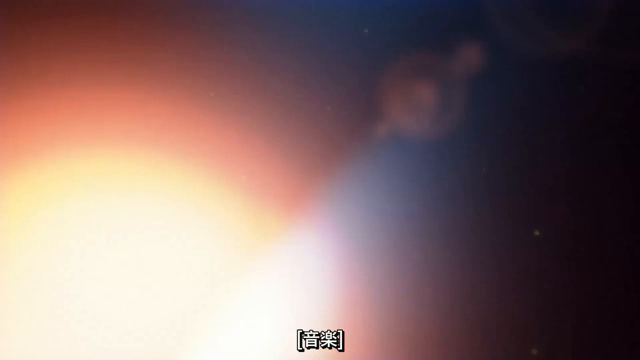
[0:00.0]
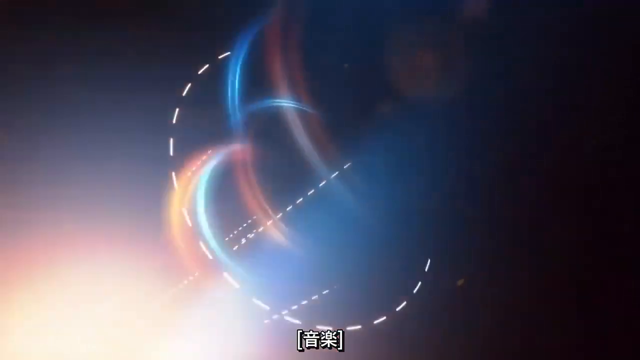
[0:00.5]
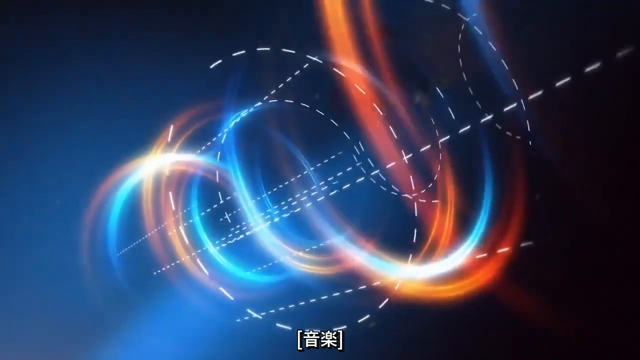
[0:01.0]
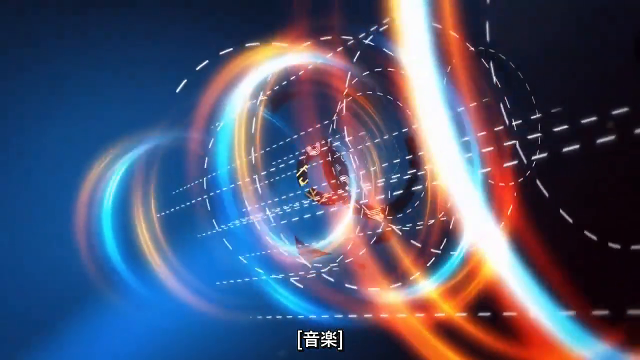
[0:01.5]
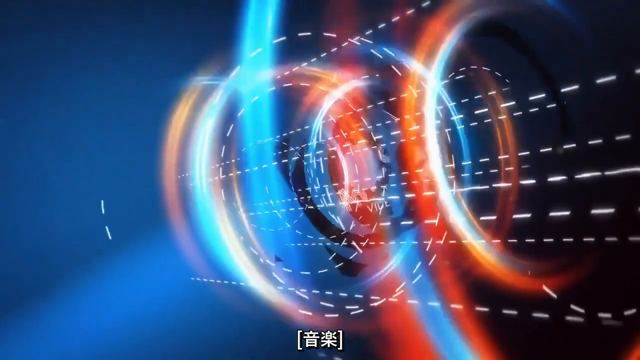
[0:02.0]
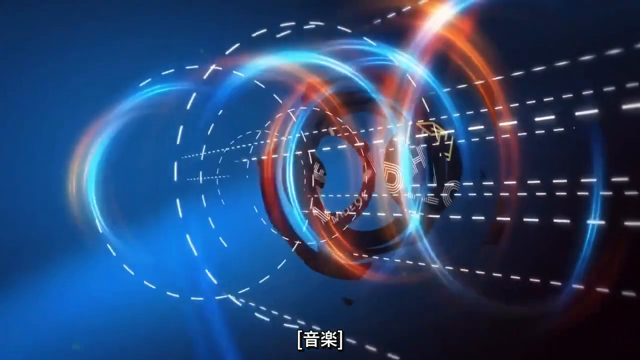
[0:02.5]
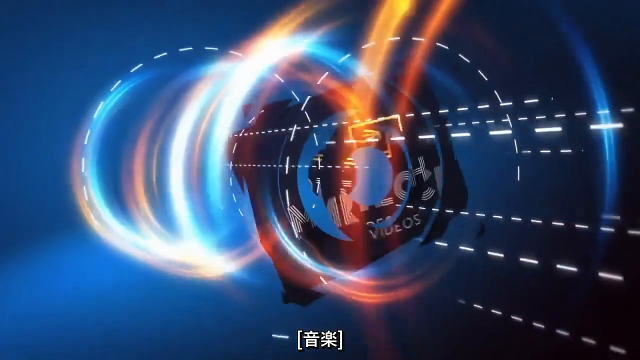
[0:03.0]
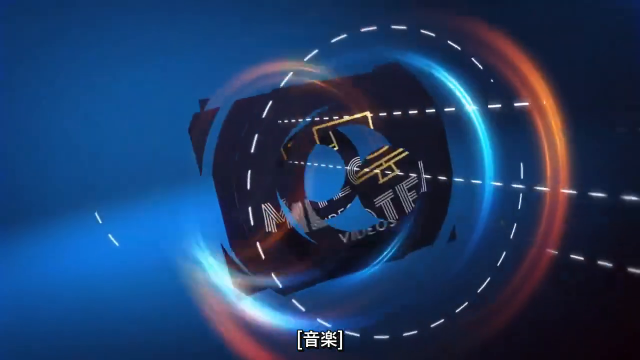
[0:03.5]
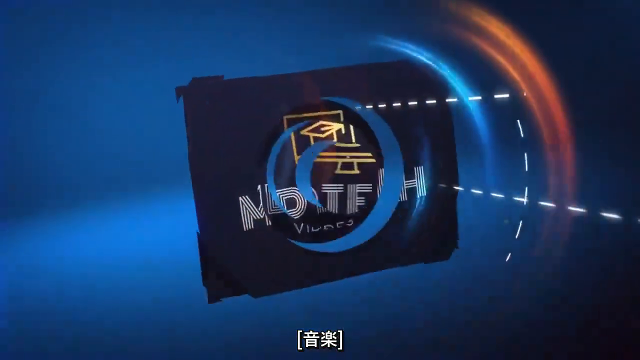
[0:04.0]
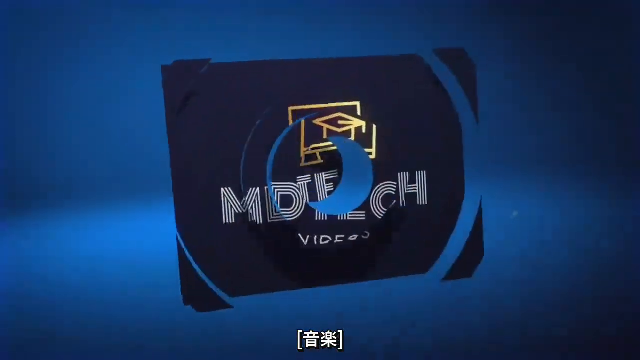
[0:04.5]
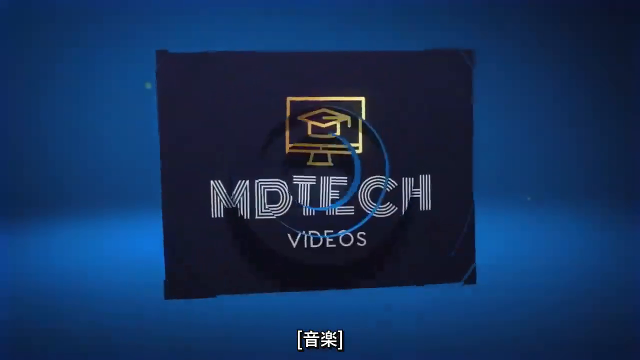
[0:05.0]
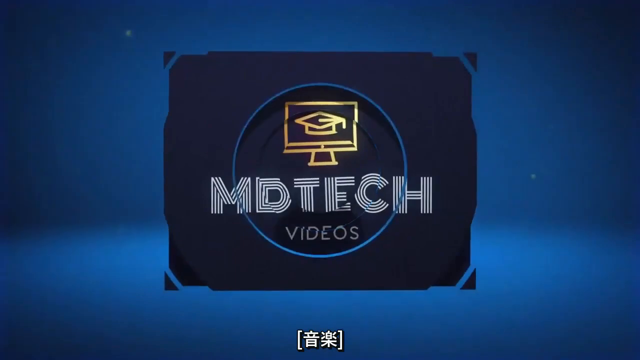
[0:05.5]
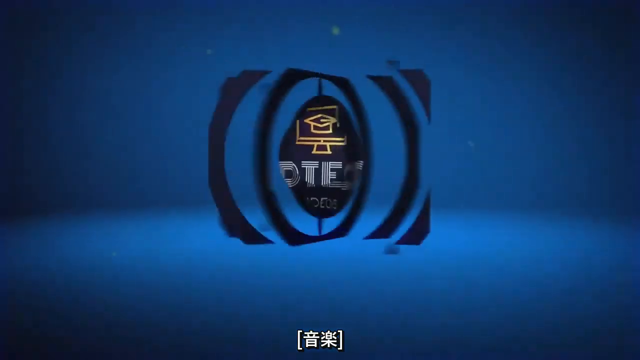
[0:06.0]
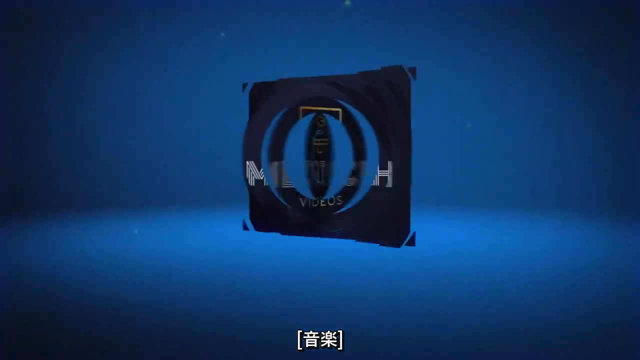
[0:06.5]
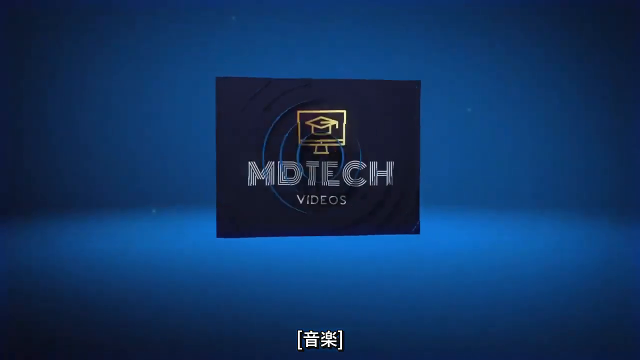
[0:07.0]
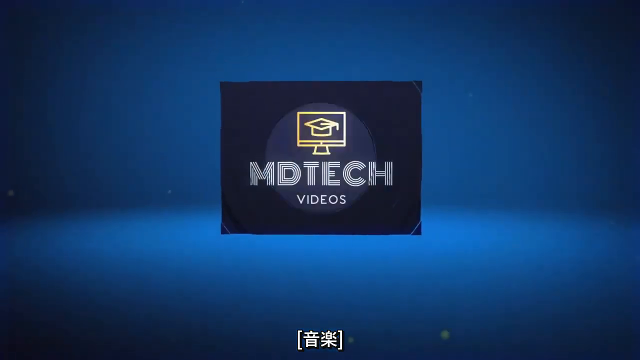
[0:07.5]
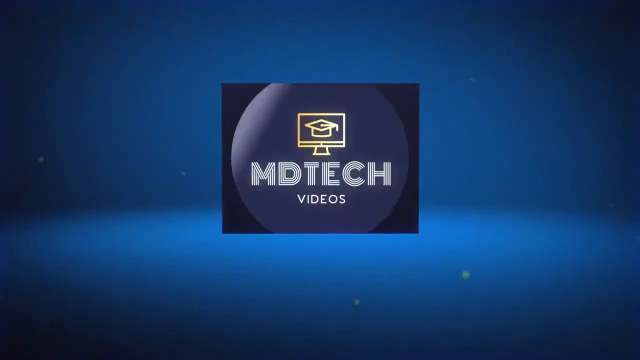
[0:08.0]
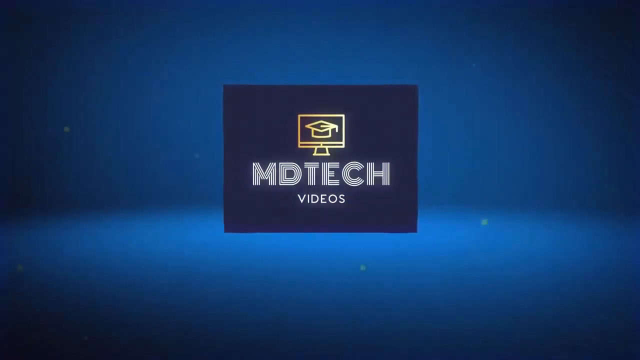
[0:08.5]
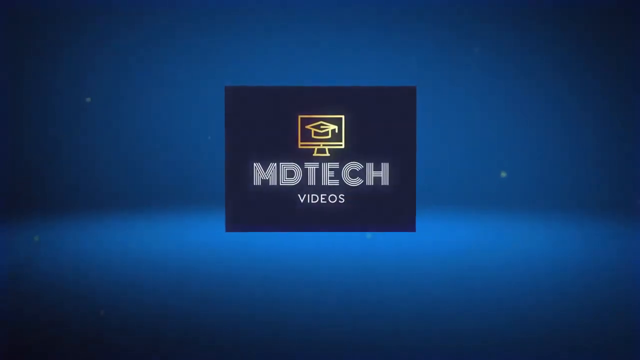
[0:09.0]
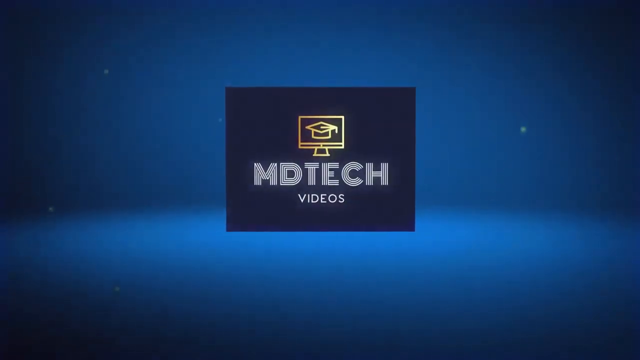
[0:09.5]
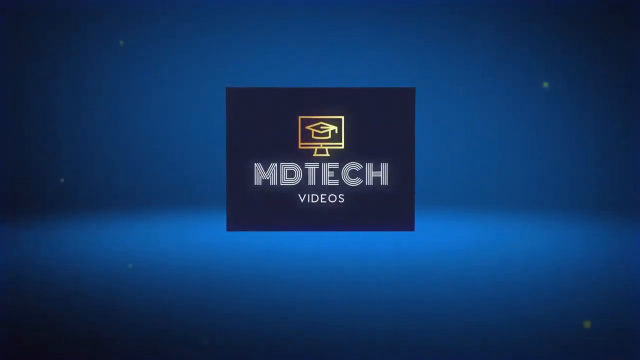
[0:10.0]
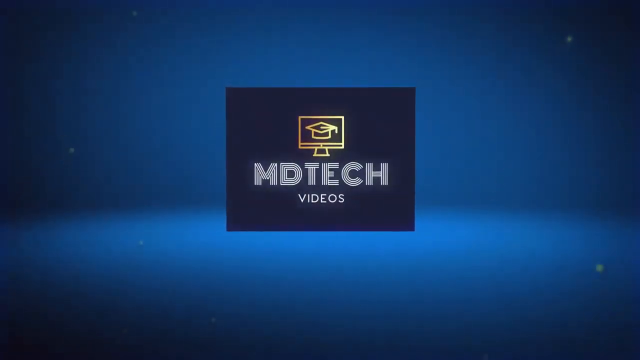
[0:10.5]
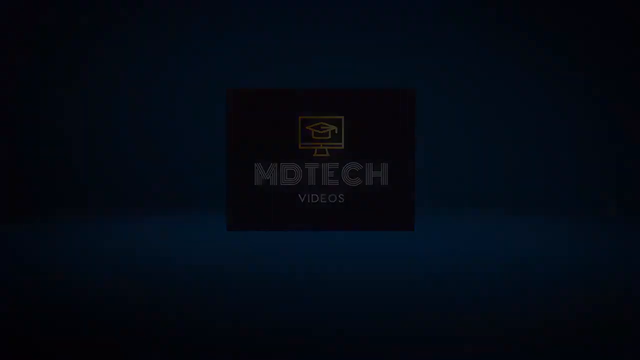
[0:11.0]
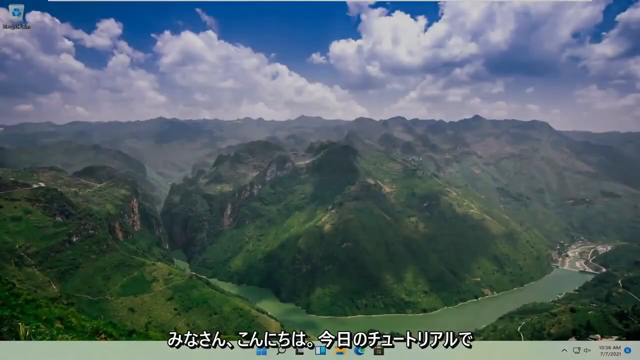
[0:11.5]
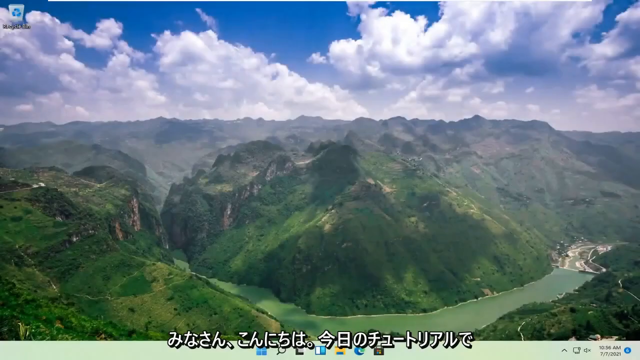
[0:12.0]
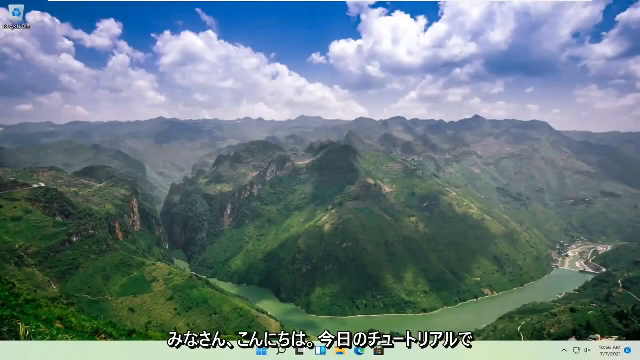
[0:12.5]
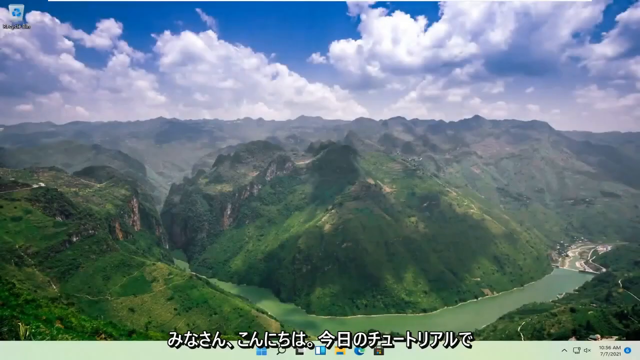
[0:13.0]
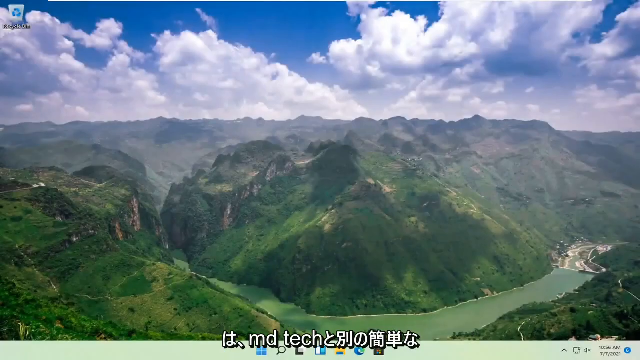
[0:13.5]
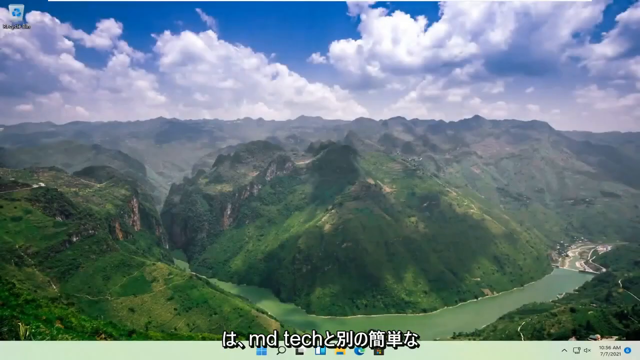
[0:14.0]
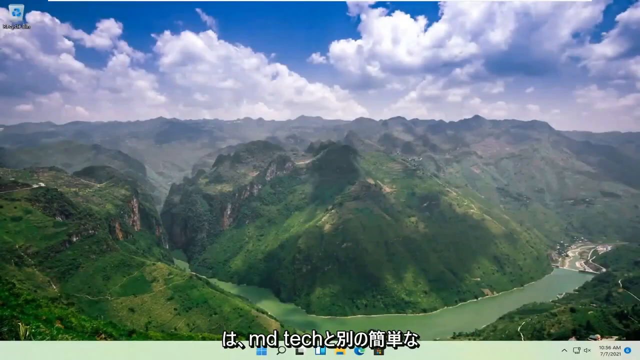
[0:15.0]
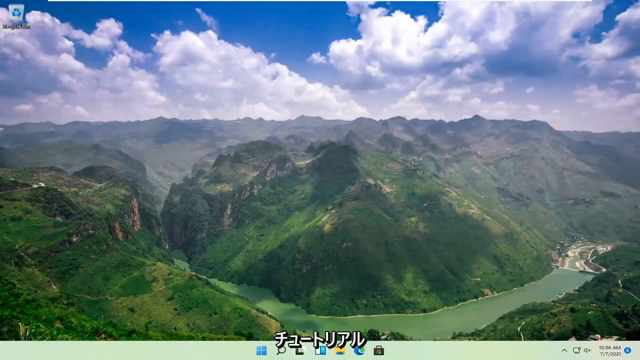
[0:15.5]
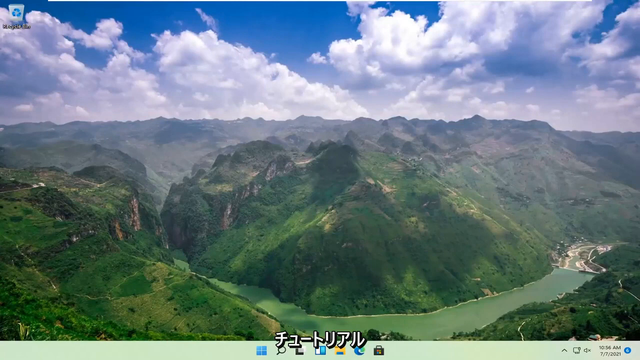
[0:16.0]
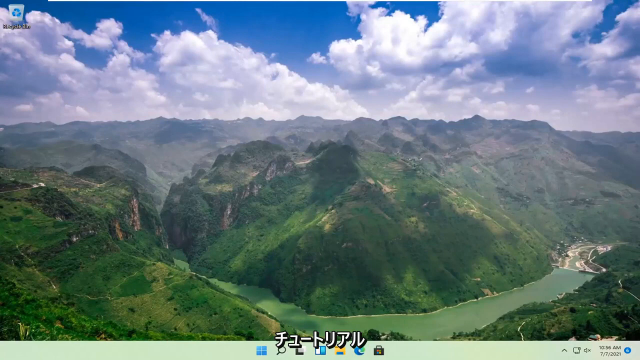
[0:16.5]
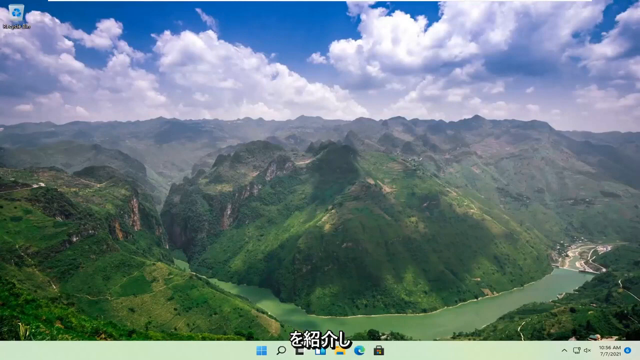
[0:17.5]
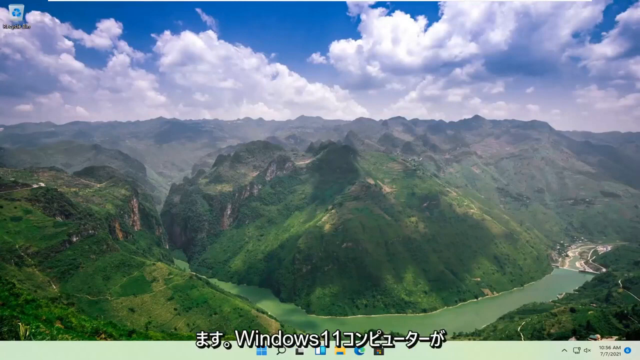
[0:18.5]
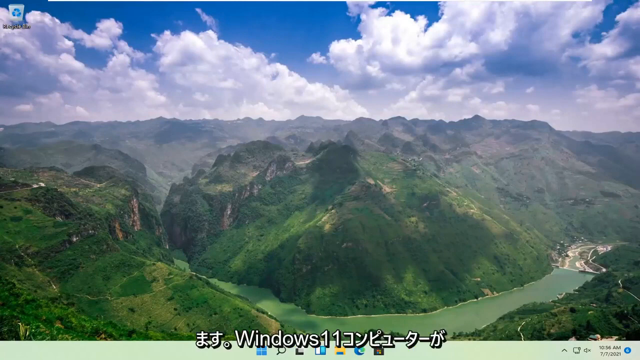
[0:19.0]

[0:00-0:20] The video opens with the logo for the company MedTech, then moves to a shot of mountains. It looks like summertime: the mountains are green, and the sky is visible behind them. As the video goes on, writing and subtitles appear at the bottom, apparently in Chinese letters. A computer screen is also visible, and in the very bottom right corner are the time and other logos and apps. The time is 10:56 am and the date is July 7, 2021. There is a volume button with an x and a messages logo. No people appear; there is only the company logo at the beginning, followed by the mountains with the sunshine and sky behind them on the far-off horizon.